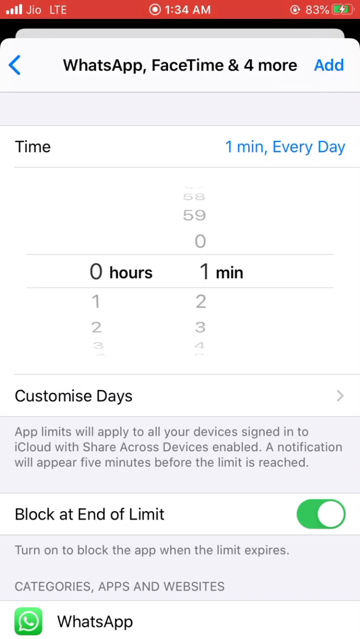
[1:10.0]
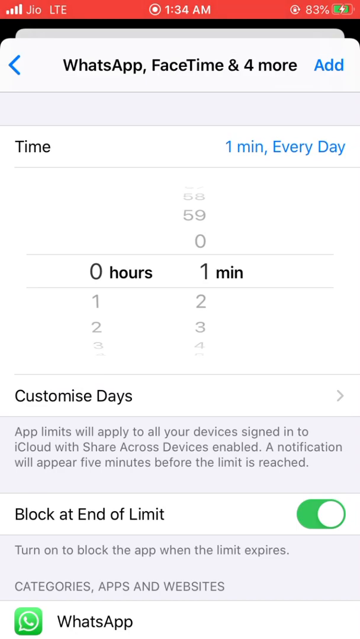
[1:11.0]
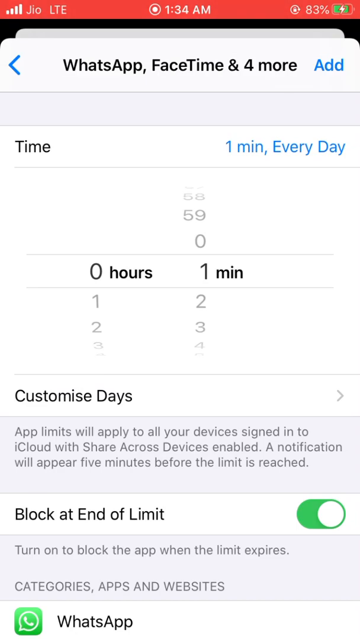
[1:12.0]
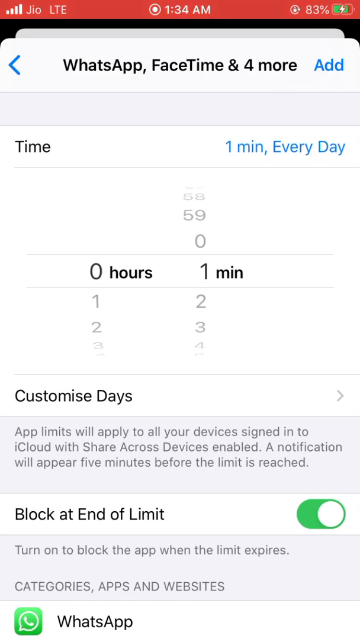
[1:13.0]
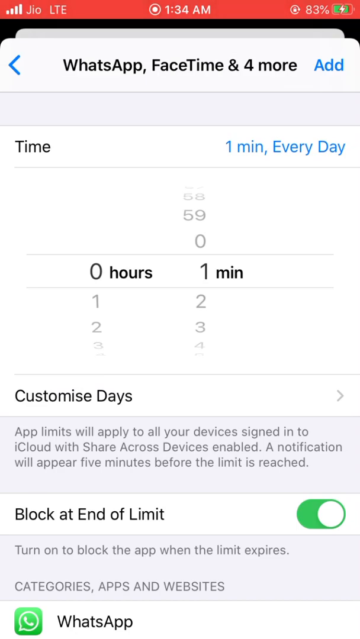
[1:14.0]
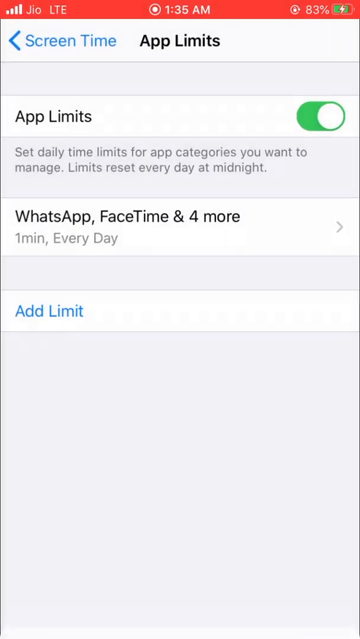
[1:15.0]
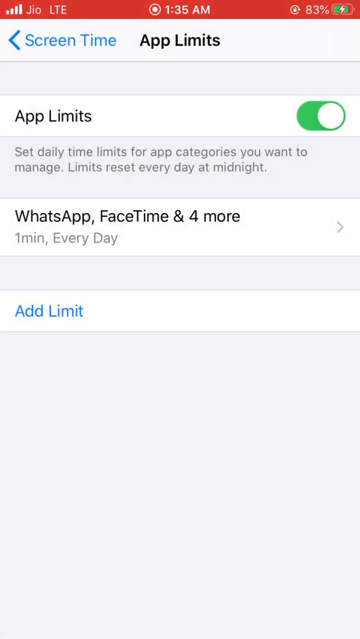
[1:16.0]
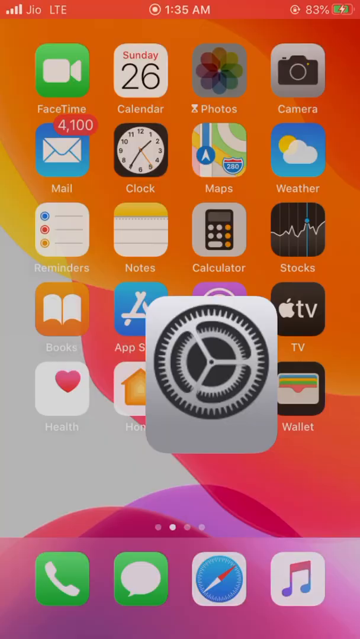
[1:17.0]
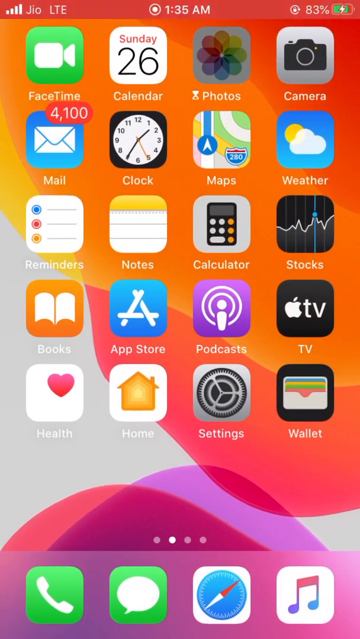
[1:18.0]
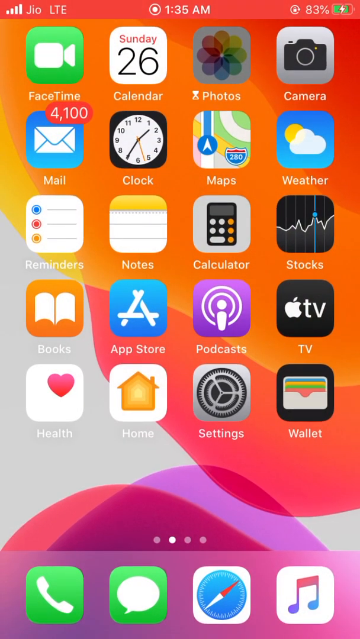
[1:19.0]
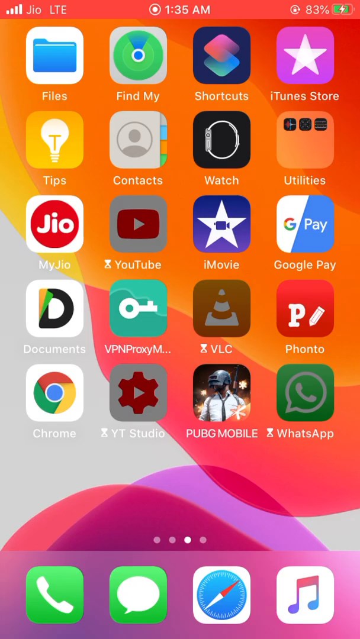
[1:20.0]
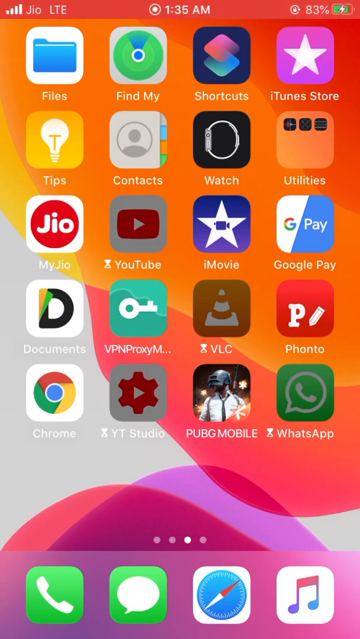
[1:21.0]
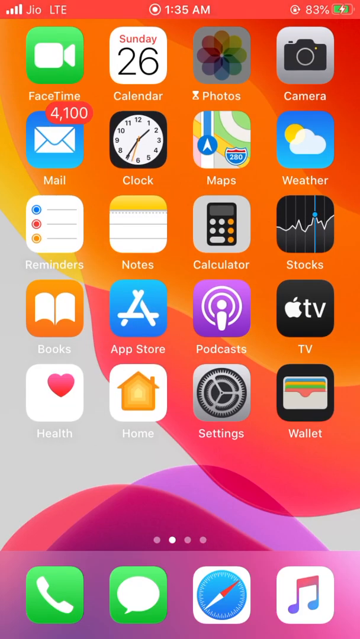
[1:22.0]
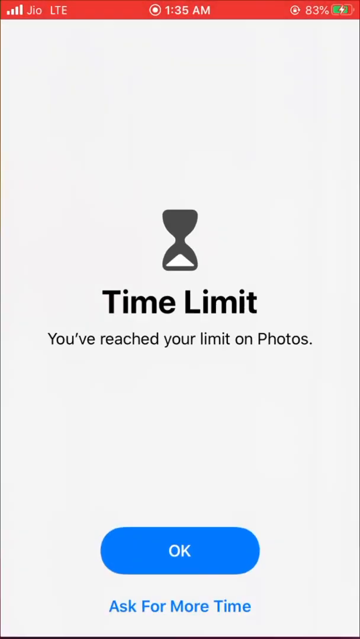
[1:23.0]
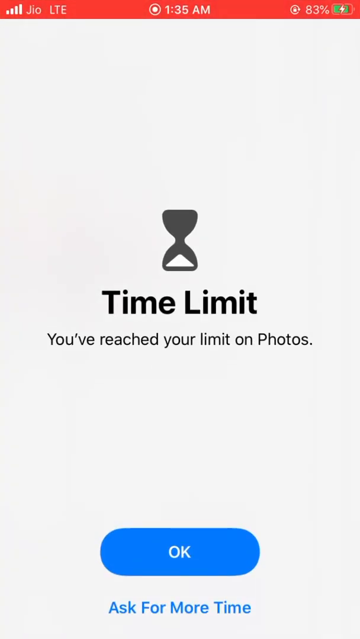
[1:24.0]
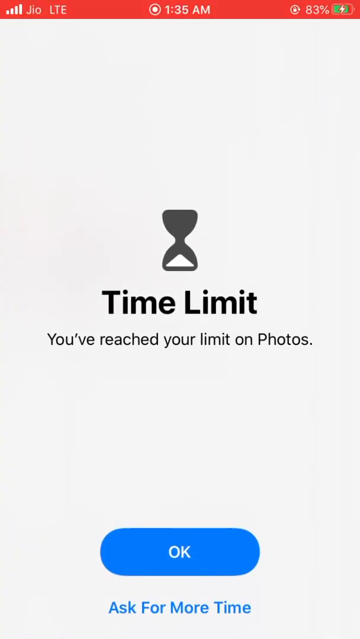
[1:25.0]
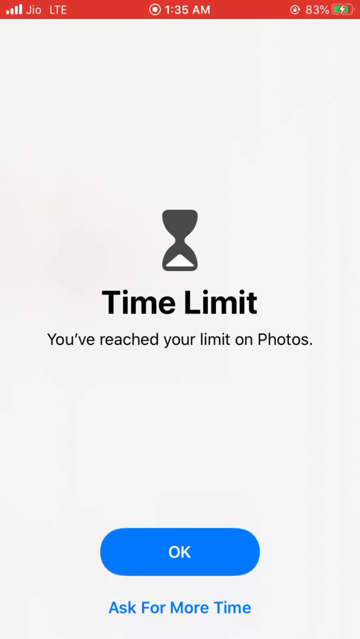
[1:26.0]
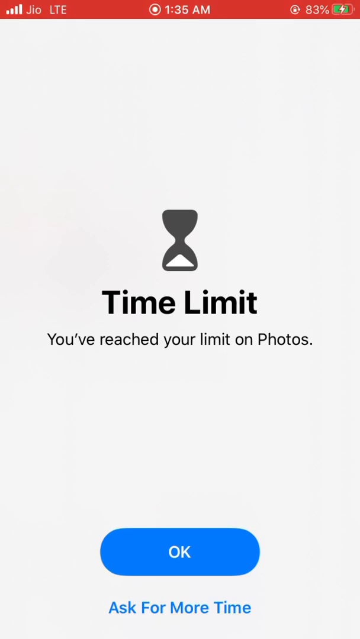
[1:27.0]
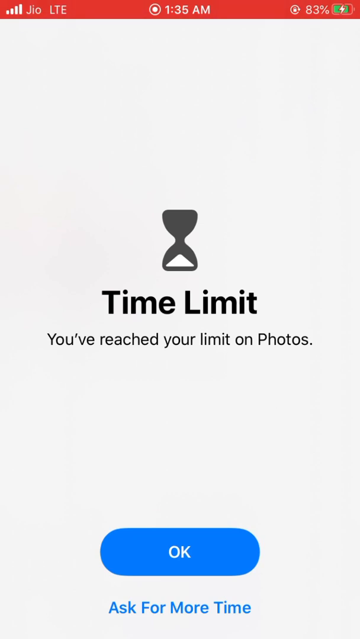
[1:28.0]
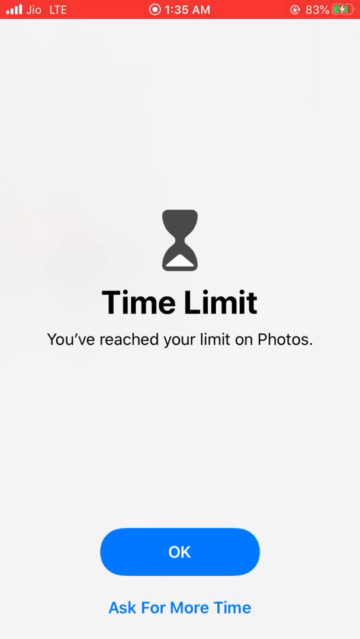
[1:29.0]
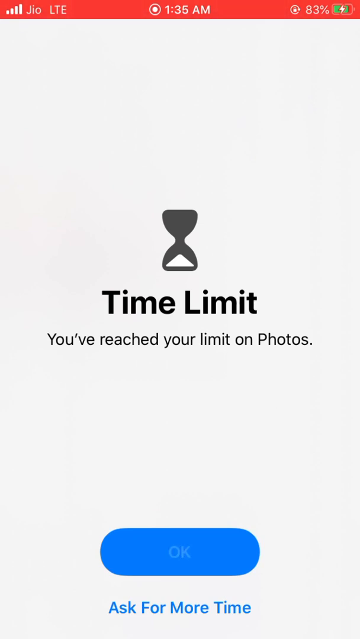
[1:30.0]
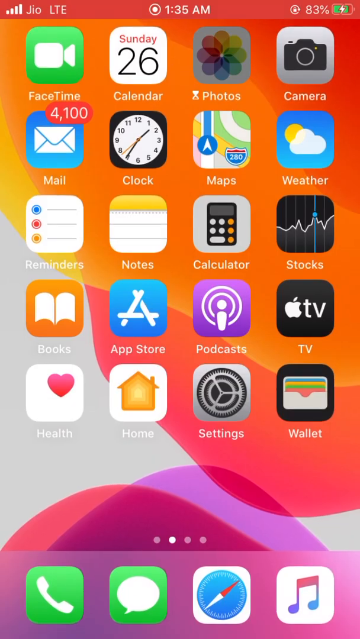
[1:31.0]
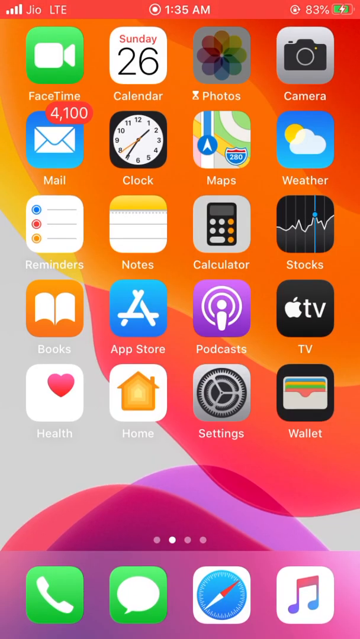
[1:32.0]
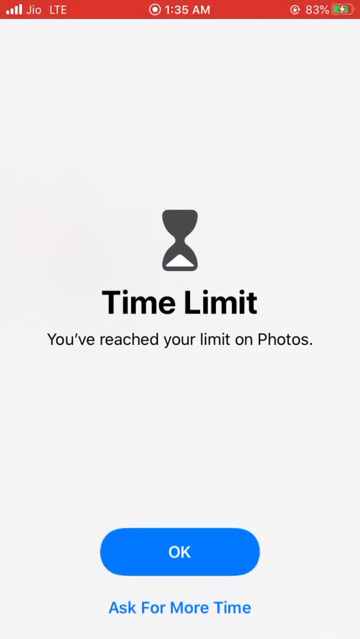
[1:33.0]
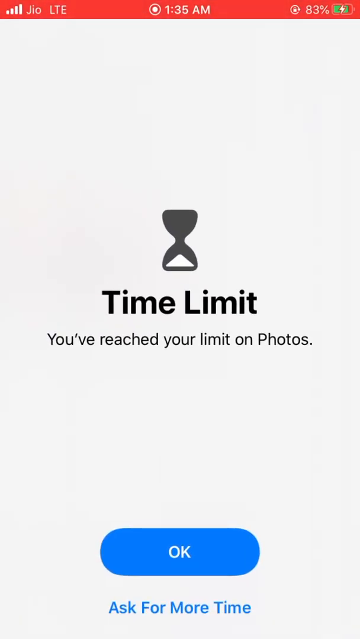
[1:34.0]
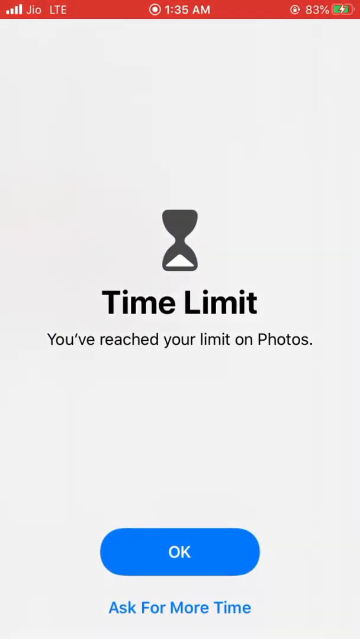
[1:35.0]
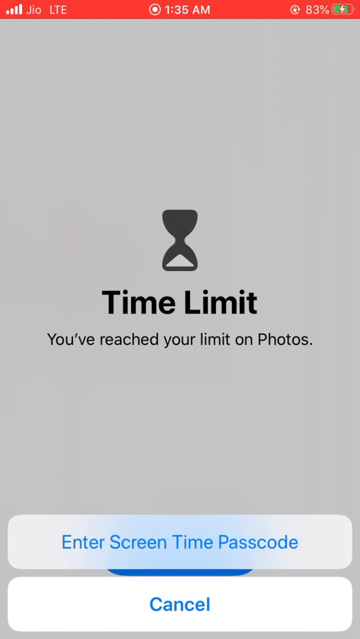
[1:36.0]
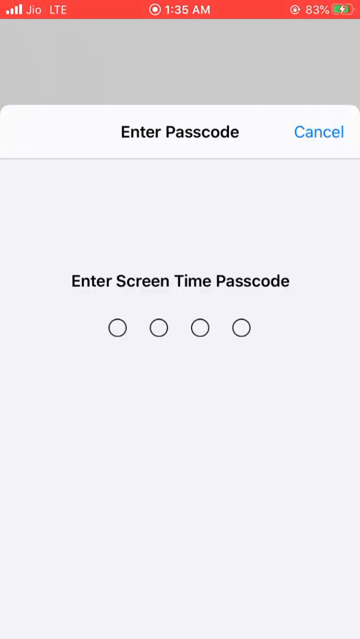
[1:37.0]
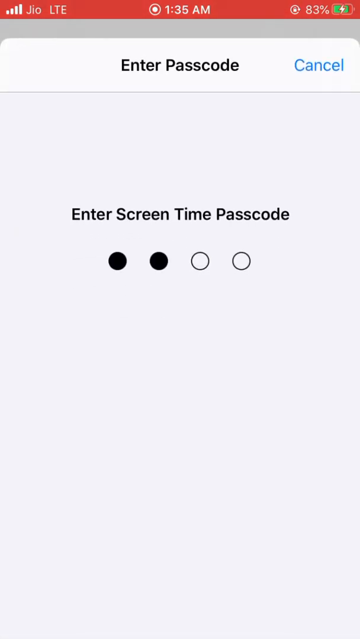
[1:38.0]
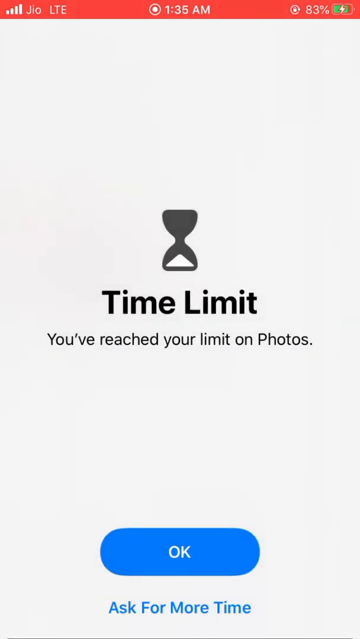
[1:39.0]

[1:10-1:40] For a moment nothing seems to happen, and then the user seems to add the option. The view switches back to the app limits page, where WhatsApp, FaceTime, and four more of the selected apps now have a one-minute every day app limit. The user returns to the home screen and scrolls to the right: YouTube, the second app in the third row, VLC, the third app in the fourth row, and YouTube Studio and WhatsApp in the fifth row are now grayed out. Scrolling over to the front page with the date, the Photos app is also grayed out. When the user taps Photos, a new screen shows an hourglass with the sand at the bottom. Below it is the text "time limit" and "you've reached your limit on photos", then a blue button reading "okay", and below that "ask for more time". The user seems to tap ask for more time, and after a screen code is entered a few options appear at the bottom.